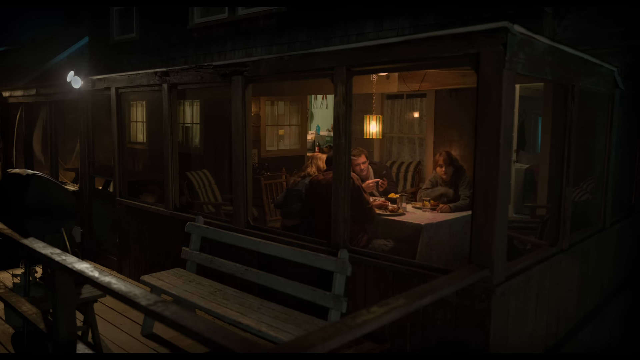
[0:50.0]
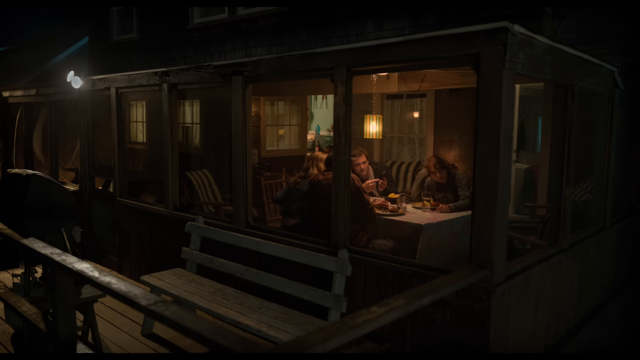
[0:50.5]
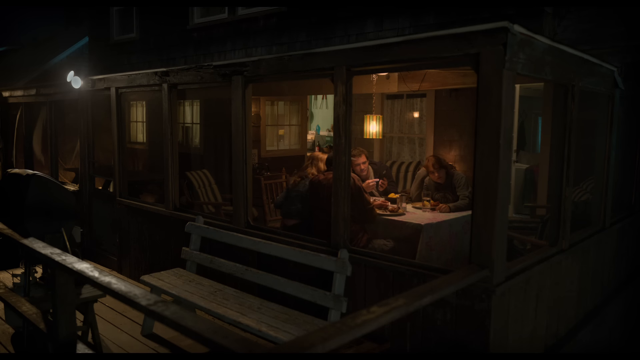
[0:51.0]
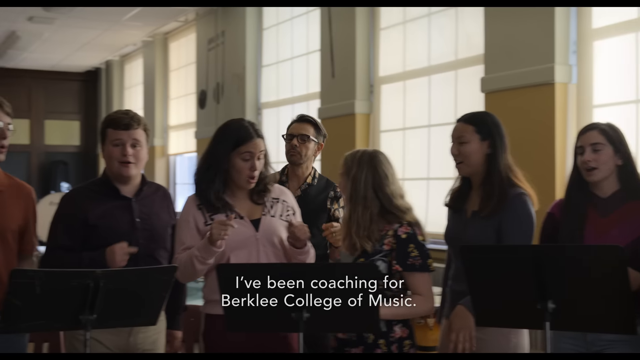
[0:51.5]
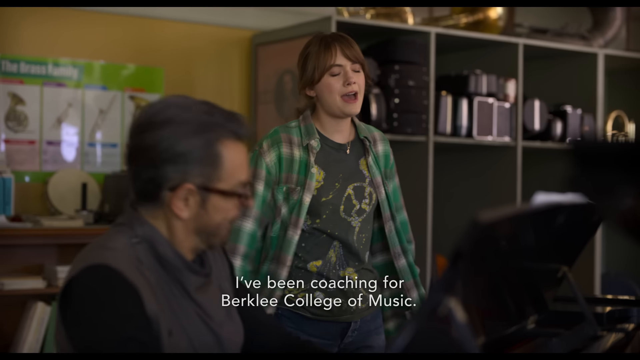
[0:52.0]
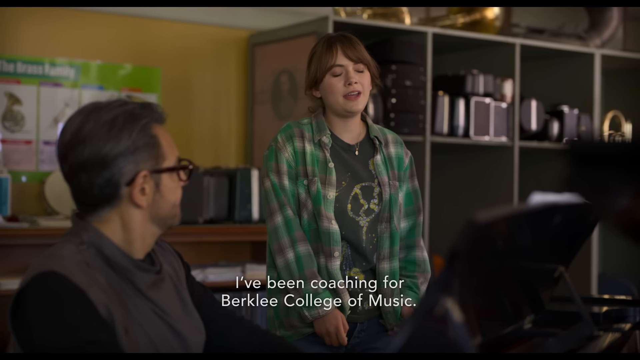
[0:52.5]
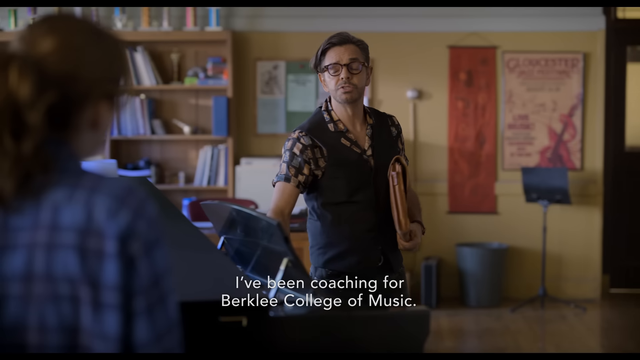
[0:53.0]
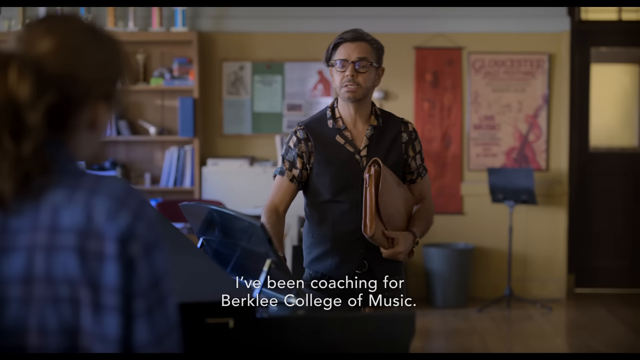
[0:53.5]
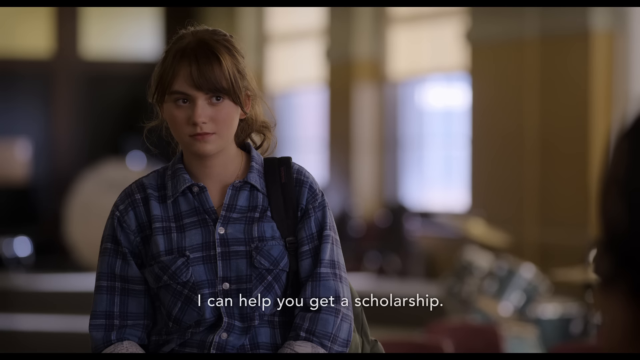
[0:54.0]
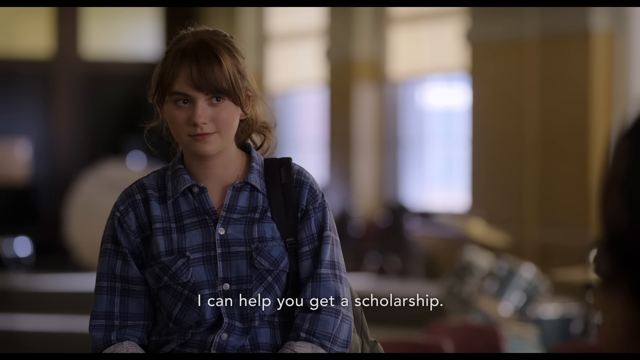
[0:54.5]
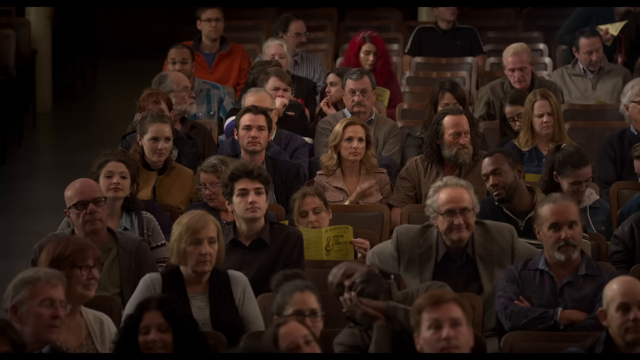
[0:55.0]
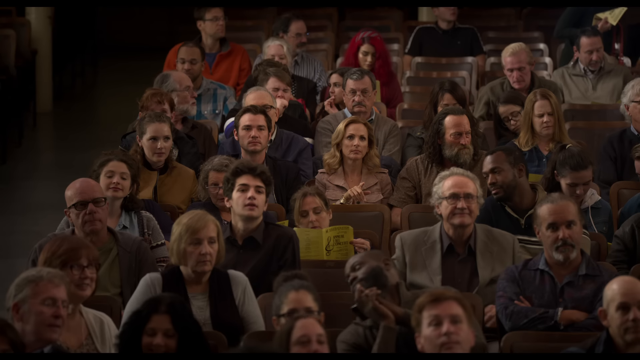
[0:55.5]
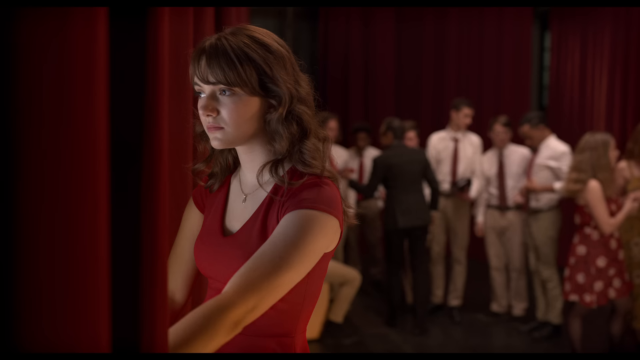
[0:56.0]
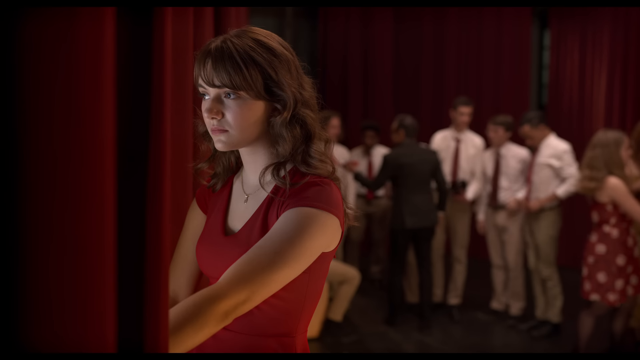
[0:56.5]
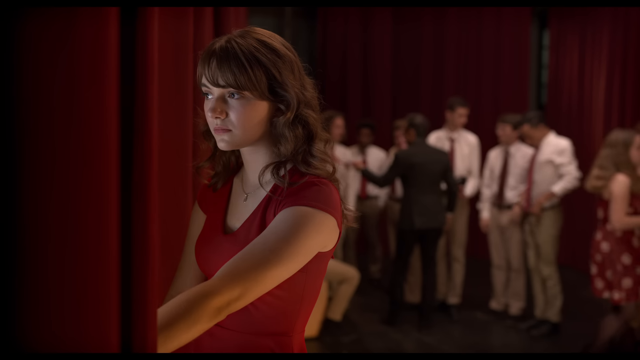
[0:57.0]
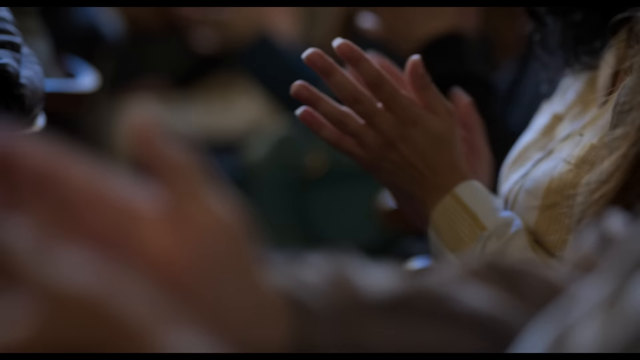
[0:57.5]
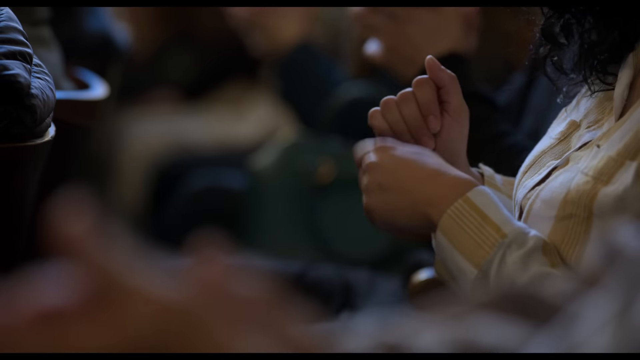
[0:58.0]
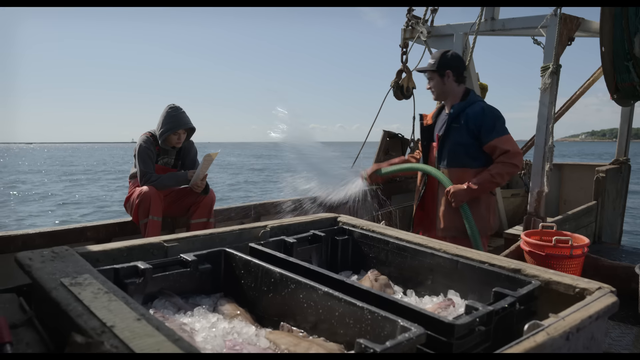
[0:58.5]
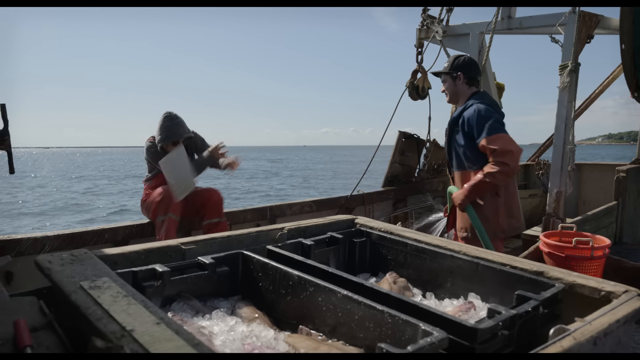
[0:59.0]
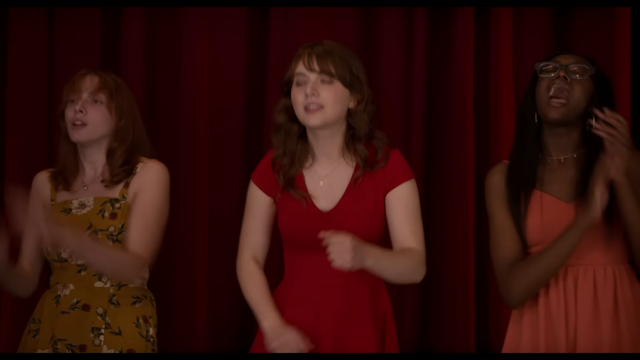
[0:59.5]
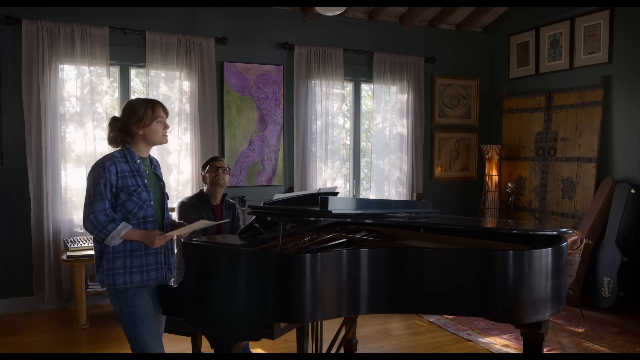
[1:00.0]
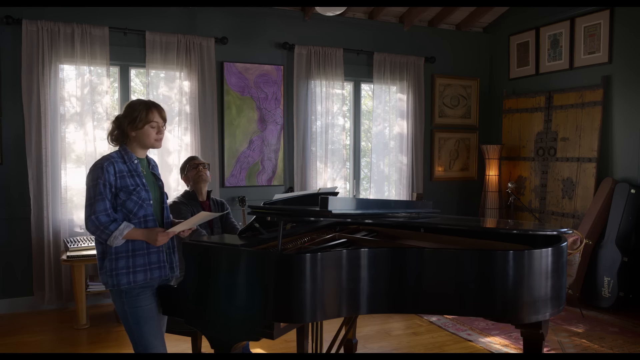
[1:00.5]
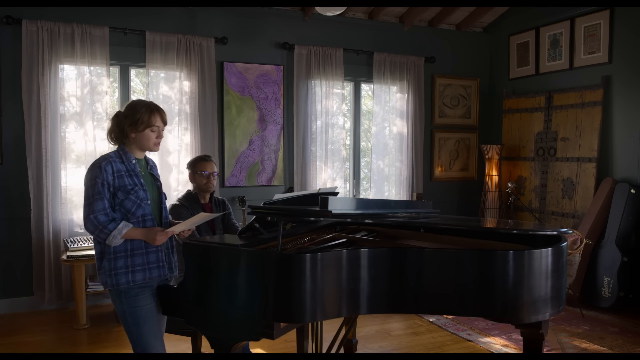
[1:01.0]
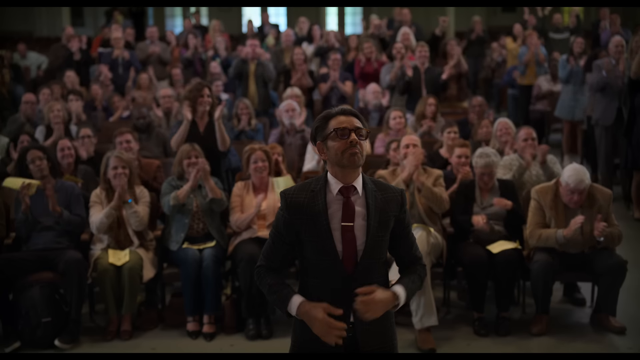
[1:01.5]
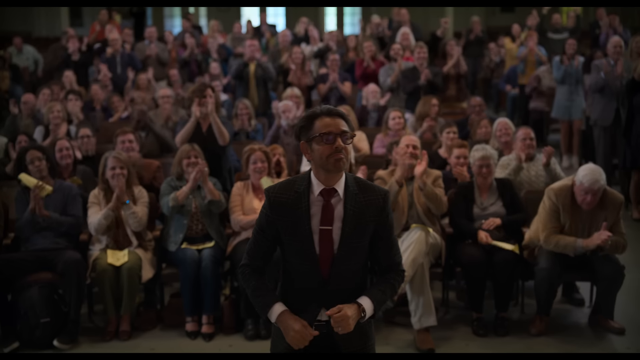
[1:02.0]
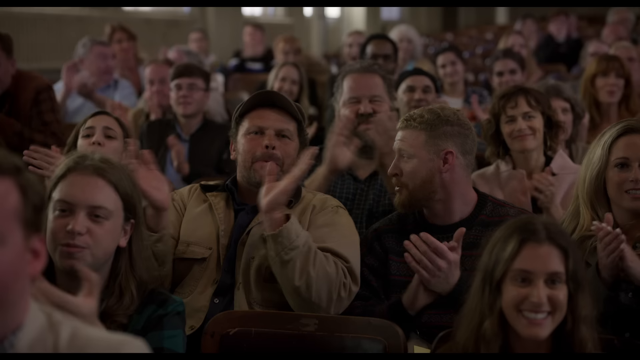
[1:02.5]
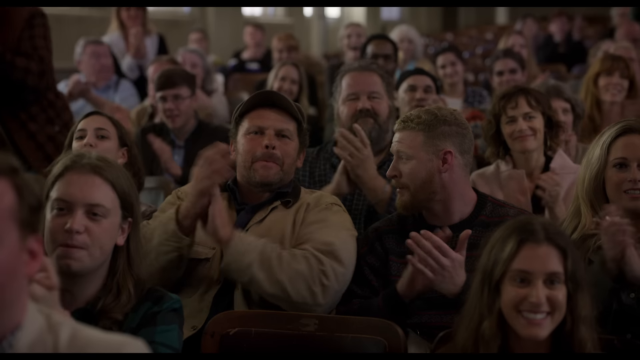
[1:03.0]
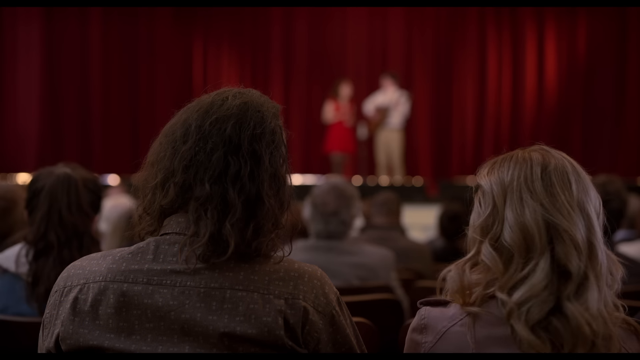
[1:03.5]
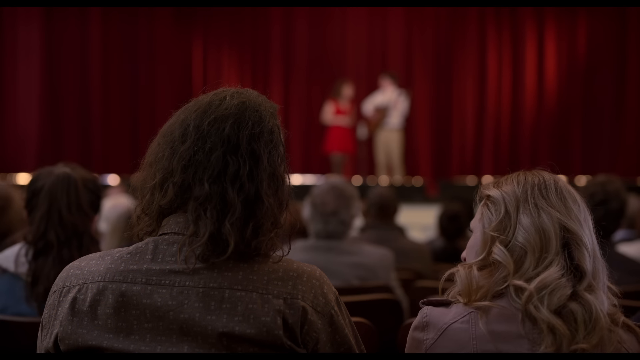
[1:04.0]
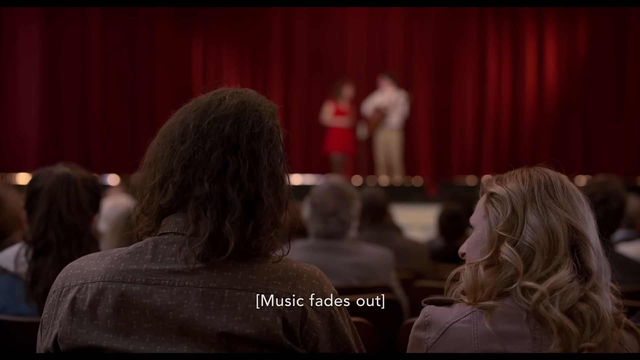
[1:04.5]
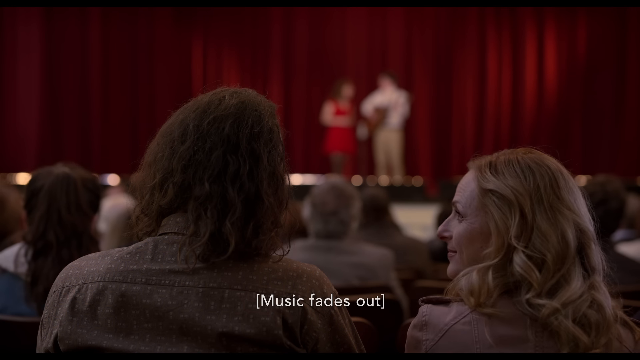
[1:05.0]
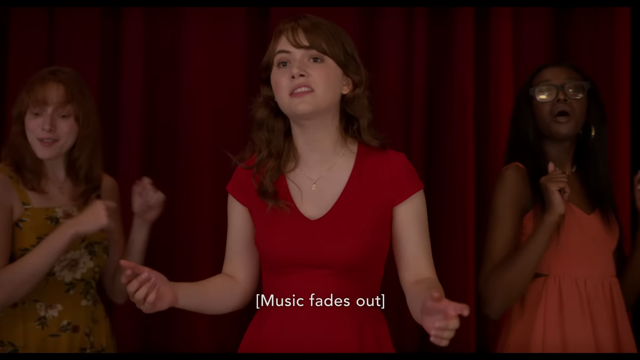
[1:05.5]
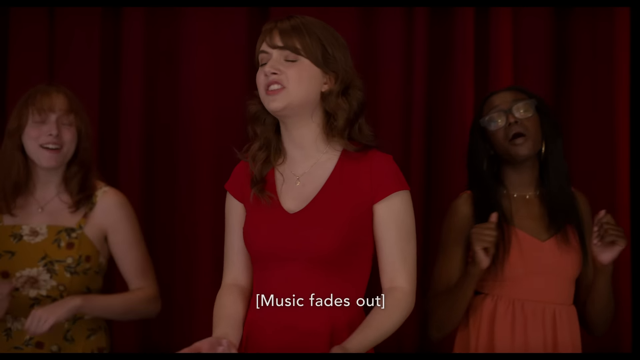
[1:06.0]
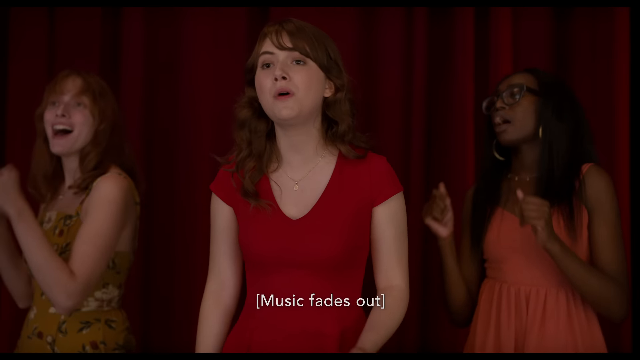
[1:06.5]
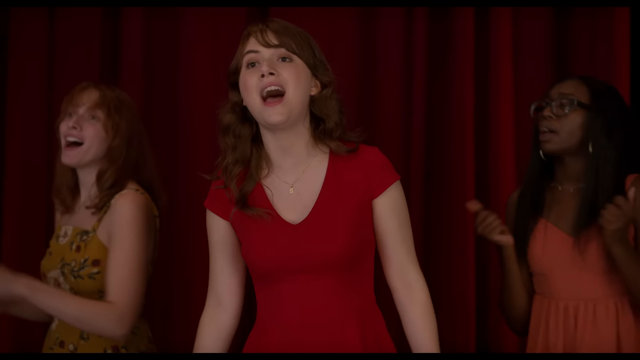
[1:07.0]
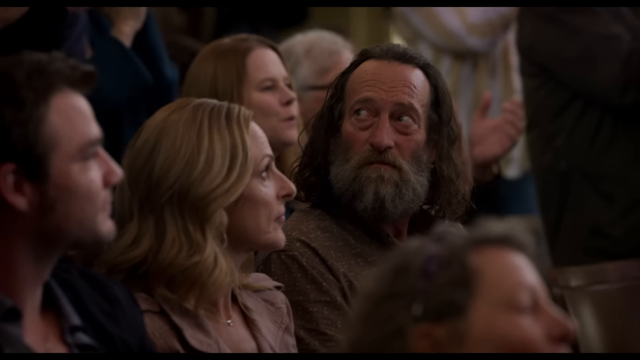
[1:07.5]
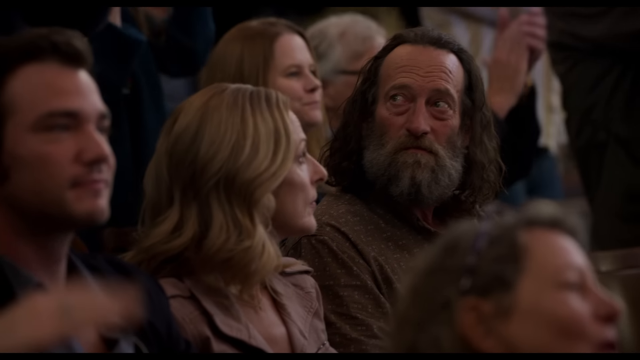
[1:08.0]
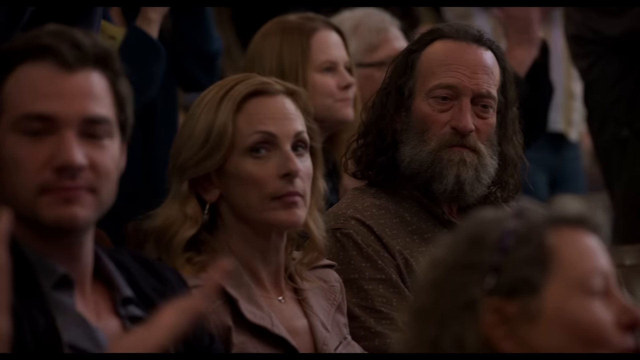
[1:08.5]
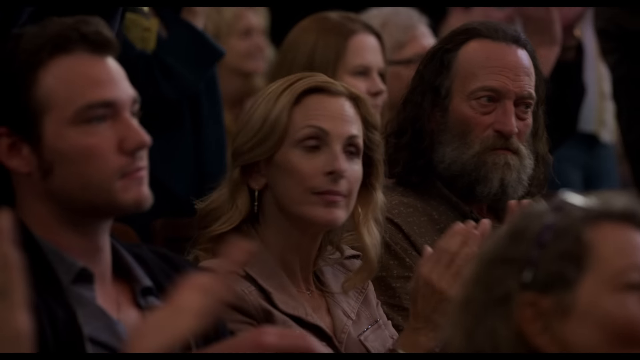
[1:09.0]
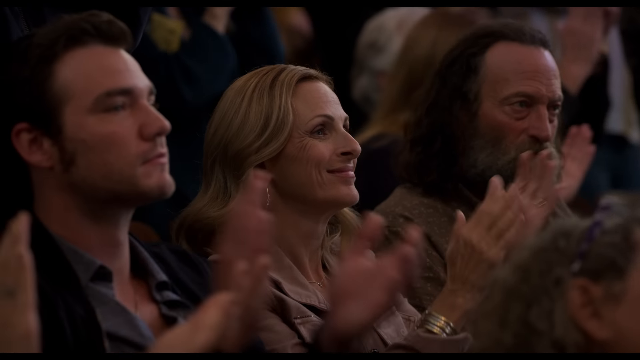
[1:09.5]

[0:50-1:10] What looks like the inside of a cabin has a glass panel revealing a dining area, where apparently four people are gathered, eating. The scene switches to what appear to be younger teenagers singing: four girls in a row with two guys on the left, what looks like a teacher behind them, and a teenage girl standing to his right. The scene switches again to the teacher across from the teenage girl in a different classroom with yellow walls; one of them holds a leather-bound binder and wears a black shirt or black vest over a short-sleeve shirt. Text at the bottom says "I've been coaching for Berklee College of Music and I can help you get a scholarship" as the girl looks on at the teacher, who wears blue plaid.